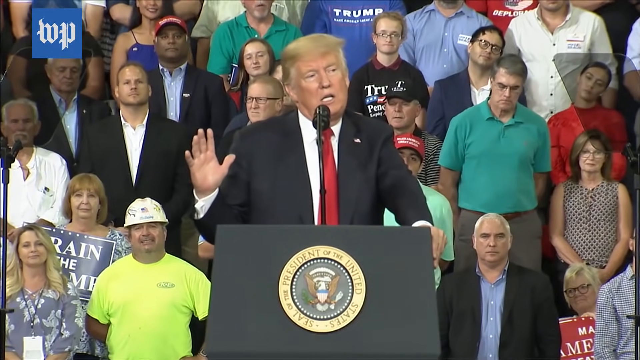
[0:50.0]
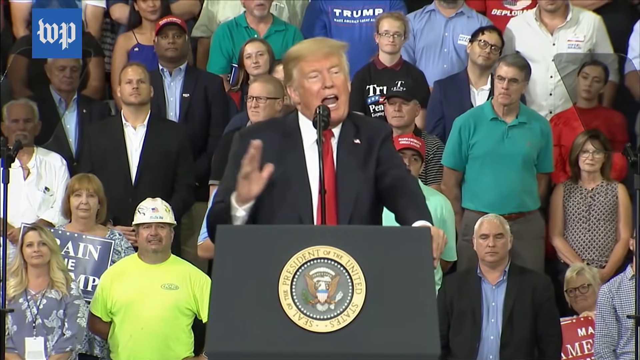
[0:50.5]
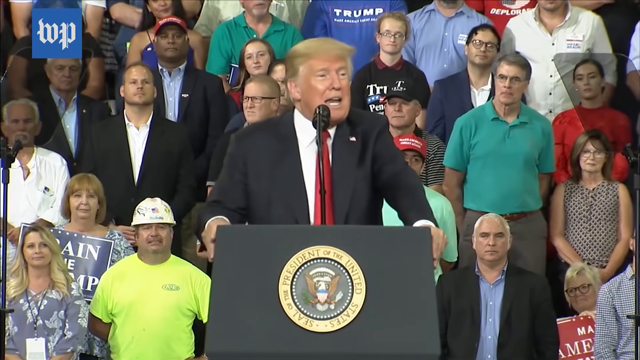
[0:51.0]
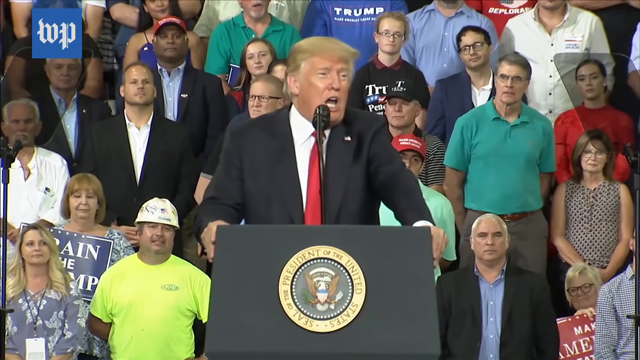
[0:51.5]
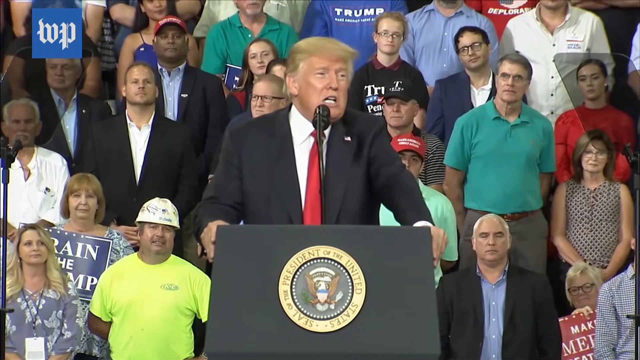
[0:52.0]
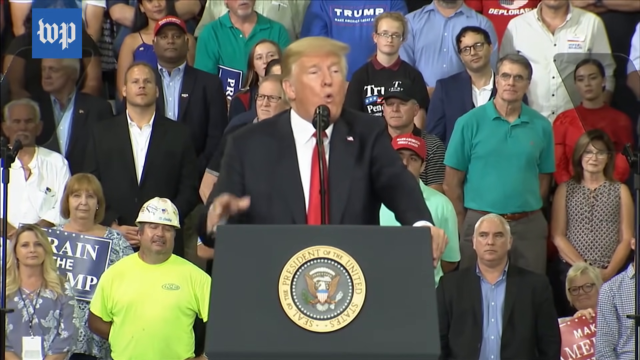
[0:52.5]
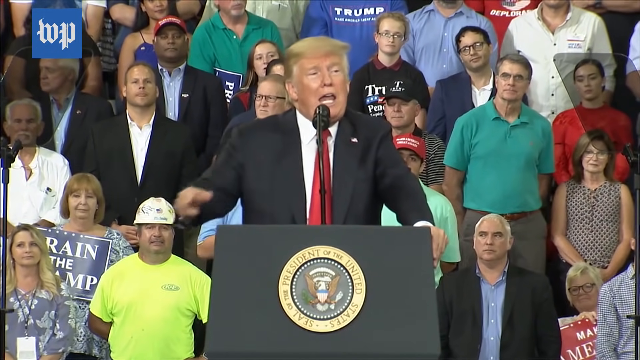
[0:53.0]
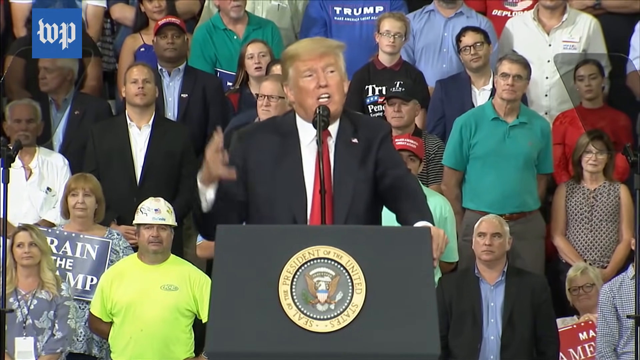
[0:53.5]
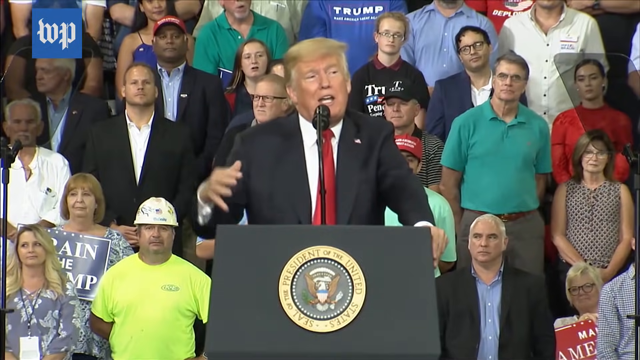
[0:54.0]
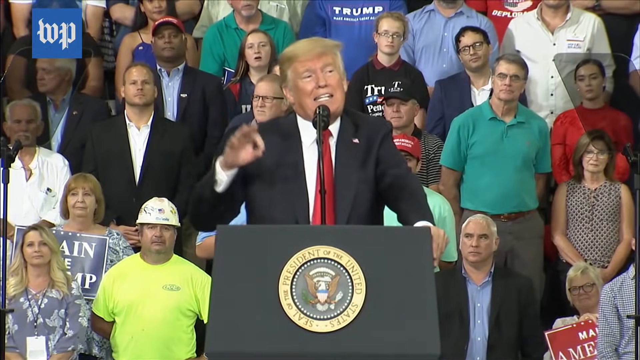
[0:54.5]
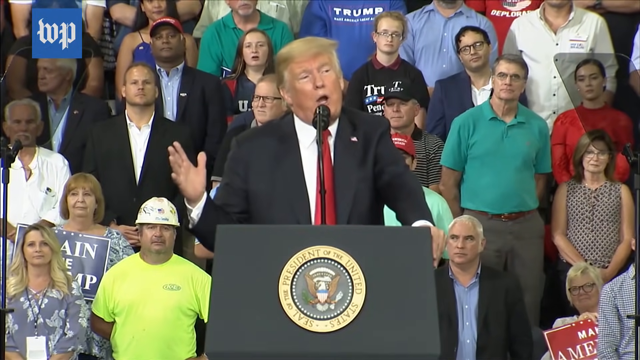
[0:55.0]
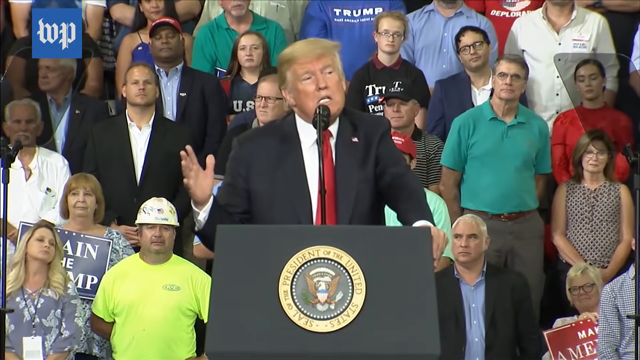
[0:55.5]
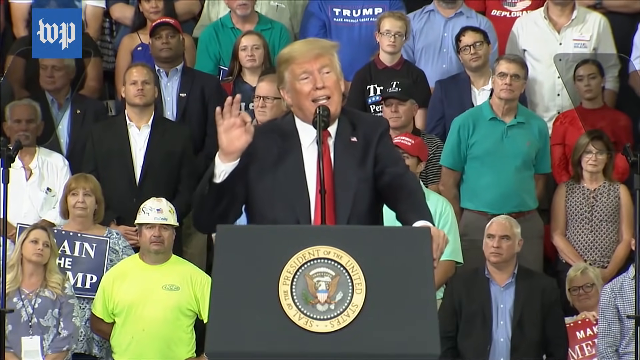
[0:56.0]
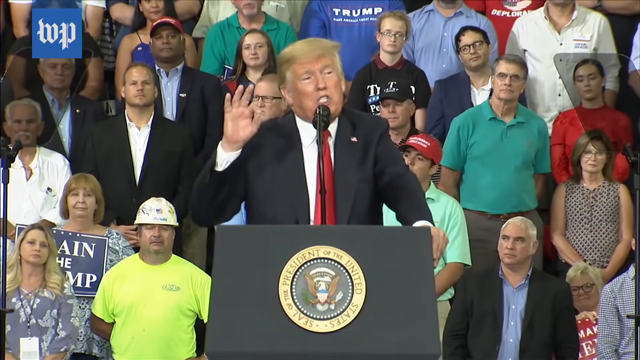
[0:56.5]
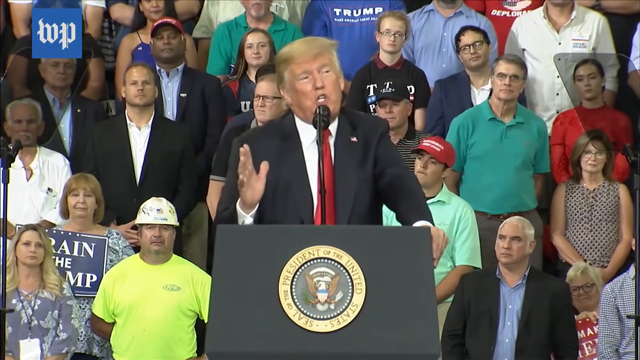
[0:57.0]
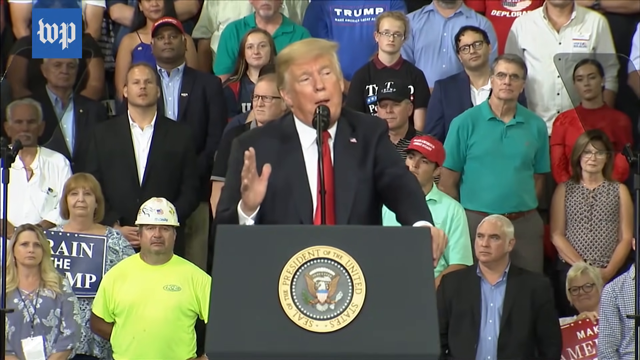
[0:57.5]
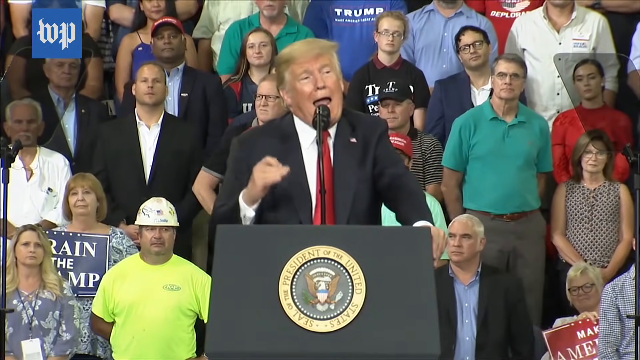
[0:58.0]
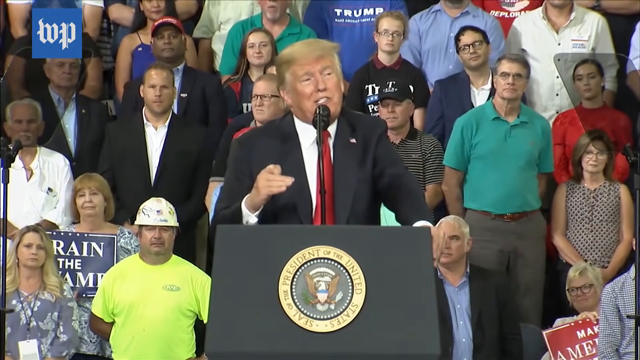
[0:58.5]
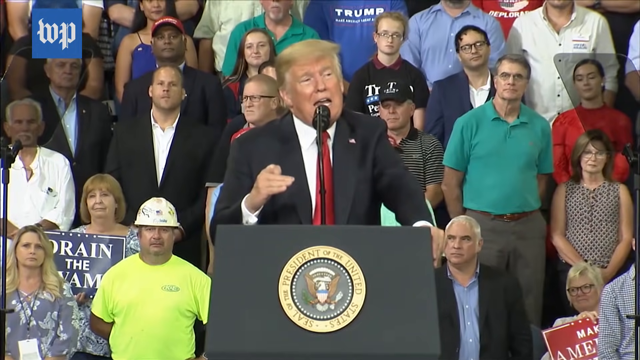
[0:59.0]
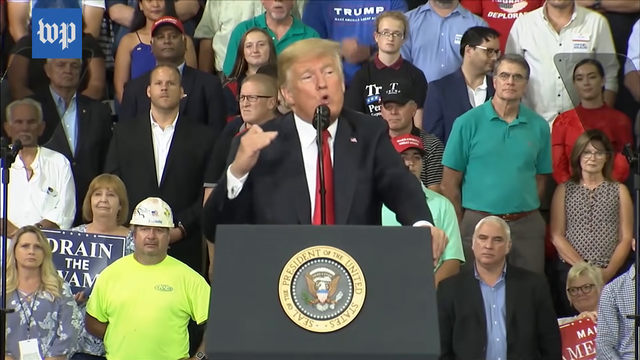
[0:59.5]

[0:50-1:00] Labels appear all over the scene. Donald Trump gives a speech before a crowd, moving his hands from right to left, and seems to be explaining something very serious. The crowd is made up of many people, many wearing Trump T-shirts, others in coats and suits, and others in T-shirts without suits. Most are men and few are women; most of the women have long black hair that looks like wigs. Trump continues speaking, wearing a black coat, white shirt and red tie, with his usual hairstyle.